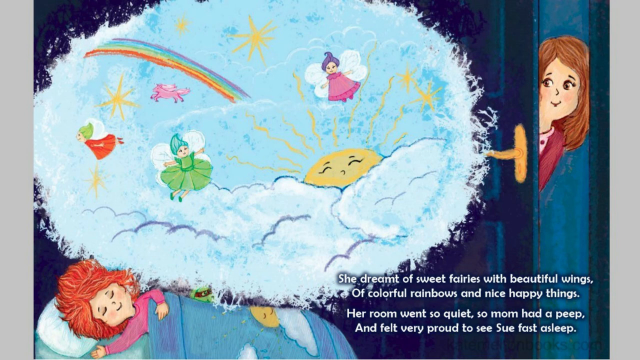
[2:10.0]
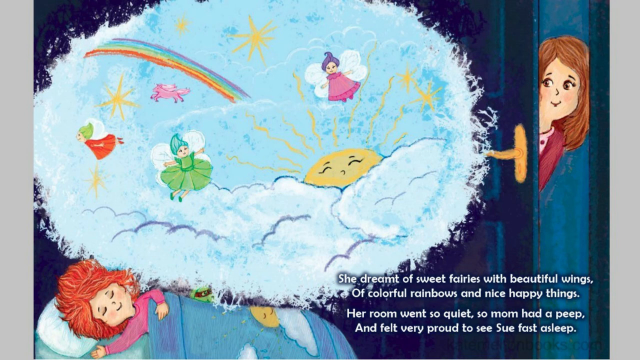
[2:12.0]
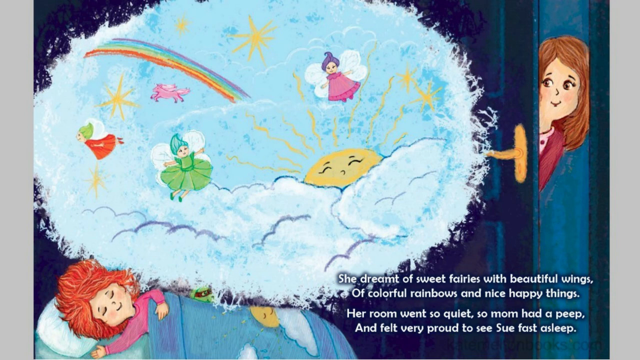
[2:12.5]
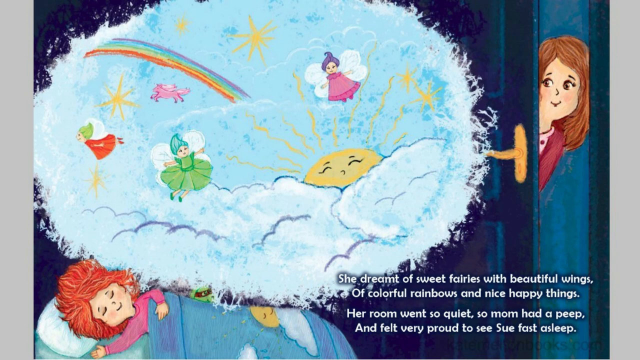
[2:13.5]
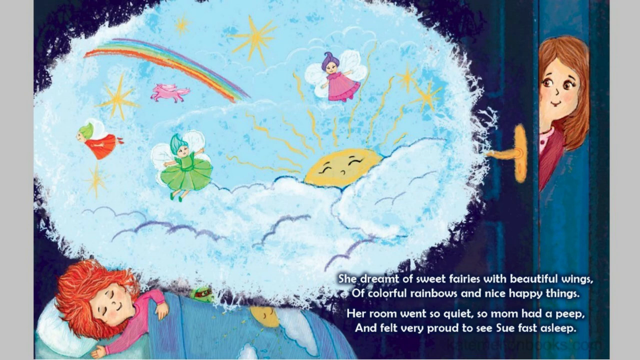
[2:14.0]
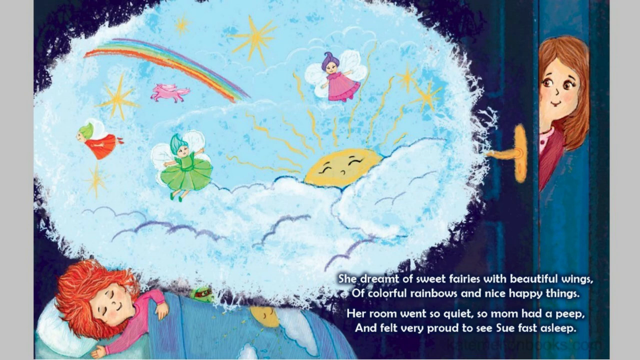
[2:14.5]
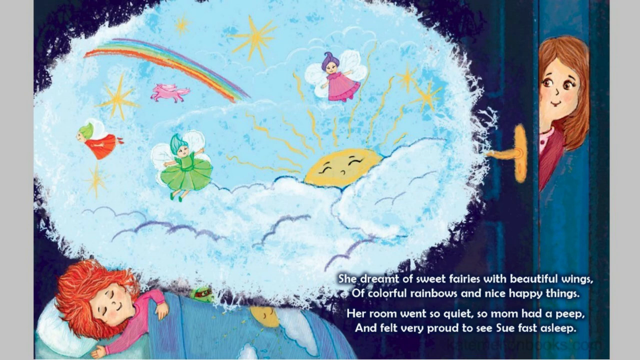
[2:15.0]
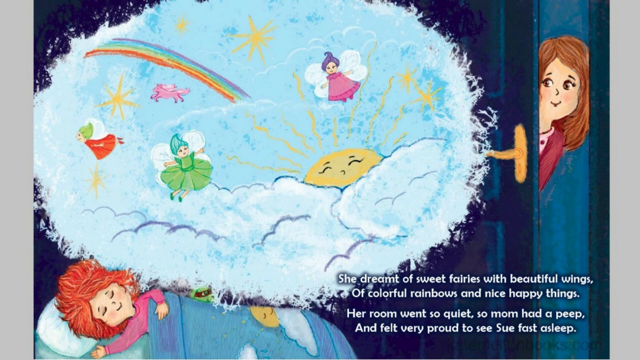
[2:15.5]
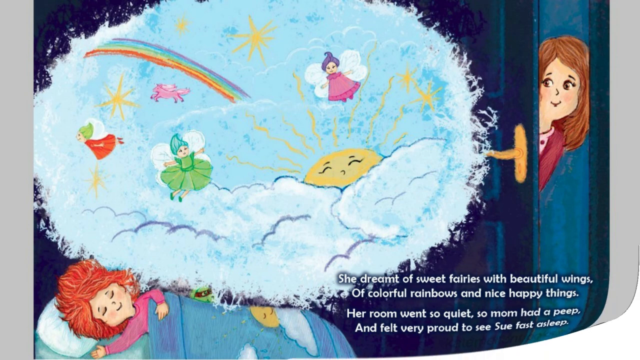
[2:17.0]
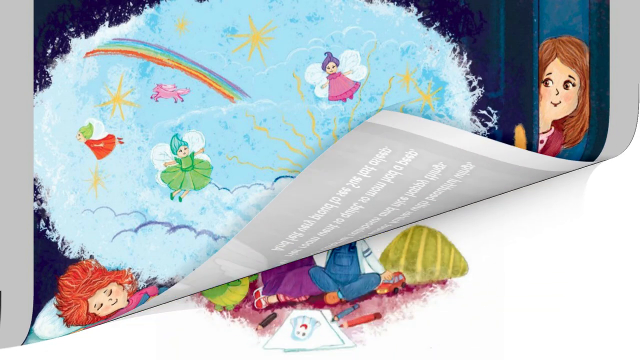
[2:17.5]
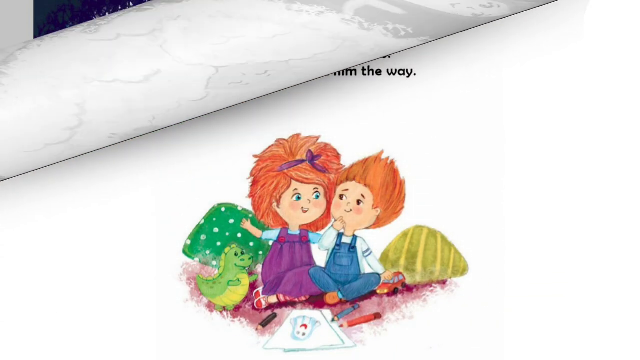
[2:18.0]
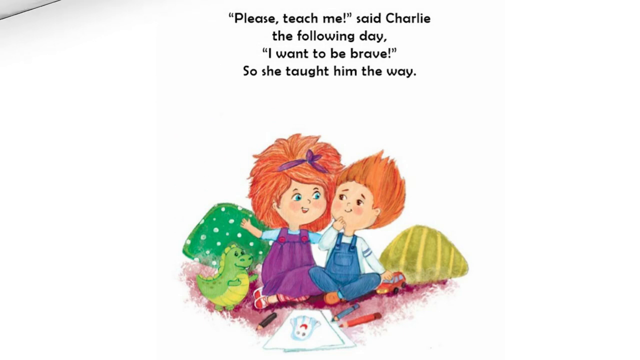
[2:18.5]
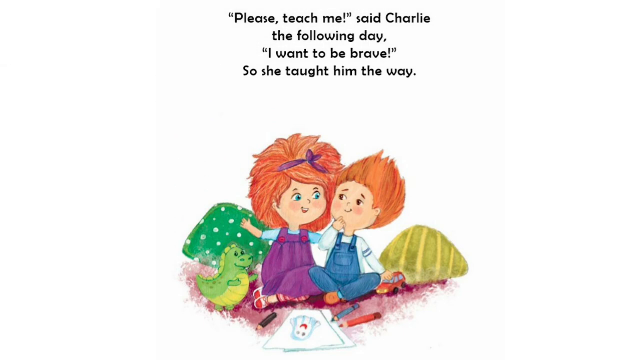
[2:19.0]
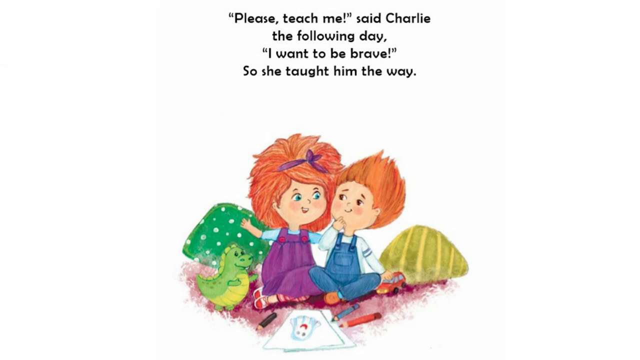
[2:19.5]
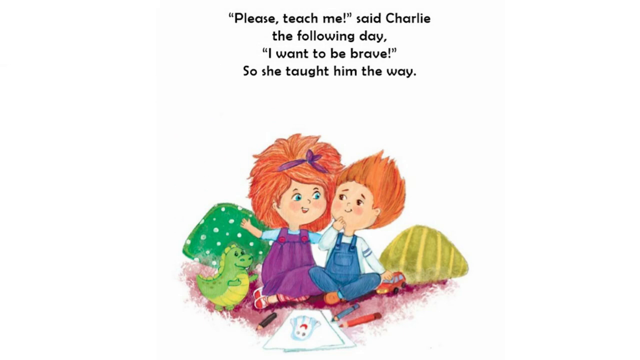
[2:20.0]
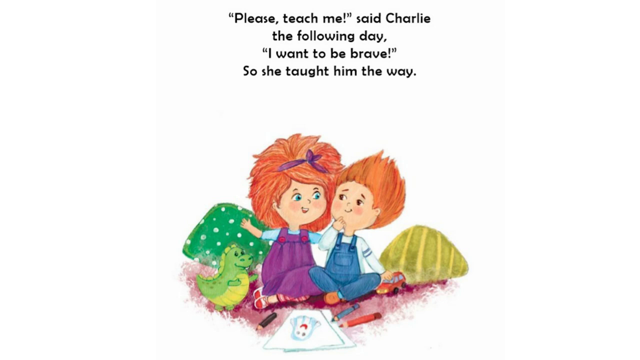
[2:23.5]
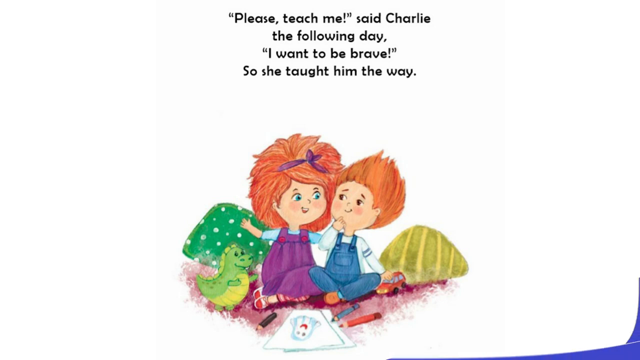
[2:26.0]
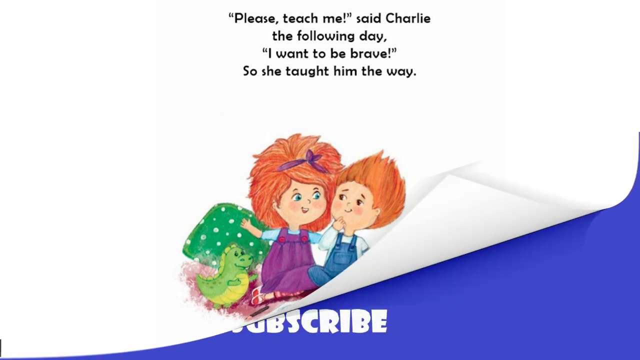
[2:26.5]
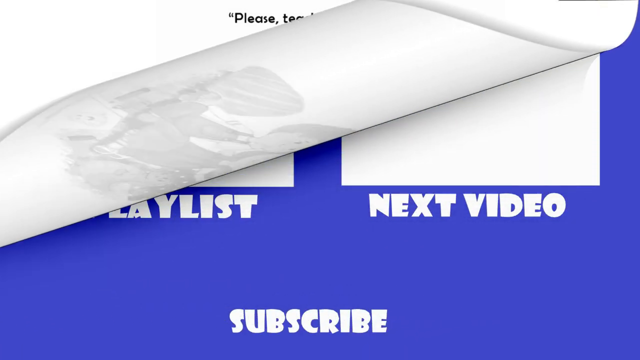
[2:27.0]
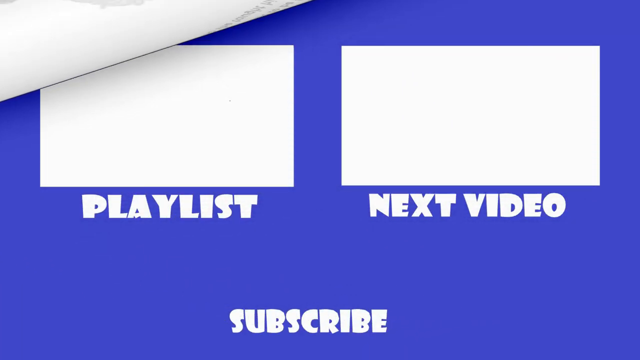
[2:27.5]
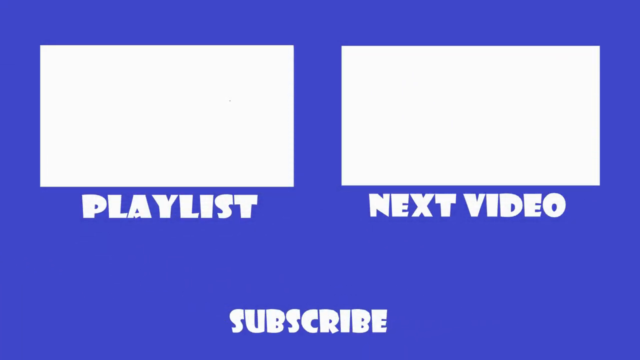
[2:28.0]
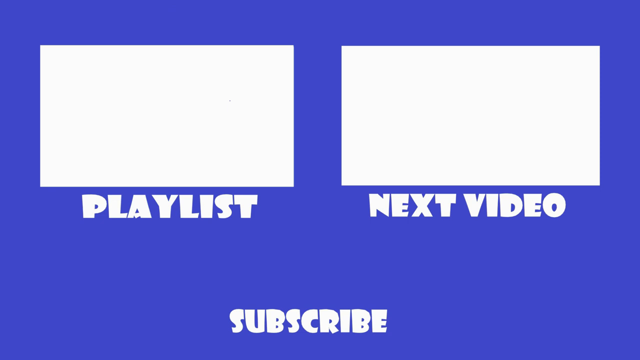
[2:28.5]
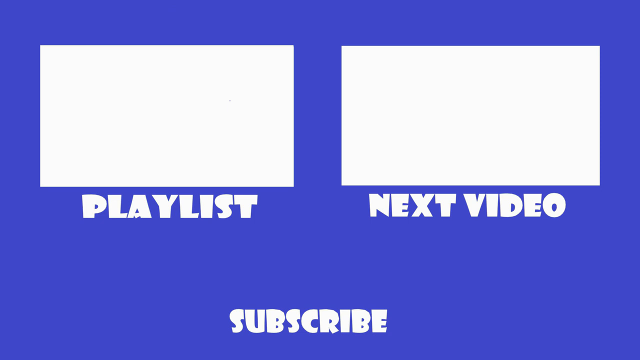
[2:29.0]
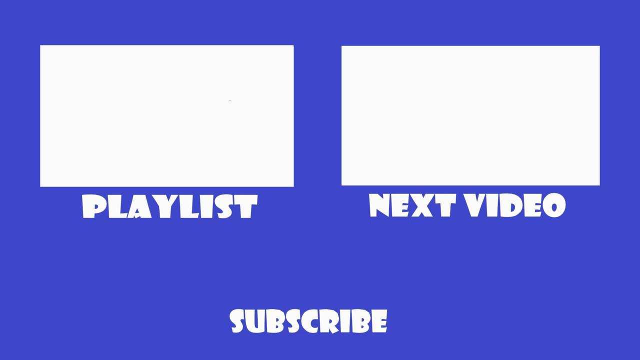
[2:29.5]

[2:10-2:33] An illustration shows the little girl with orange hair lying on her bed with the covers over her body, dreaming of sunshine, flying fairies, a unicorn, and a rainbow, with clouds. Outside of that, the mom looks through the doorway, peeking in while the girl sleeps. Text in the bottom right begins "She dreamt of sweet fairies with beautiful wings, and colorful rainbows" and includes "Her room went so quiet, so mom had a peep." The video then cuts to the last page, with text beginning "Please teach me, said Charlie" and including "I want to be brave."